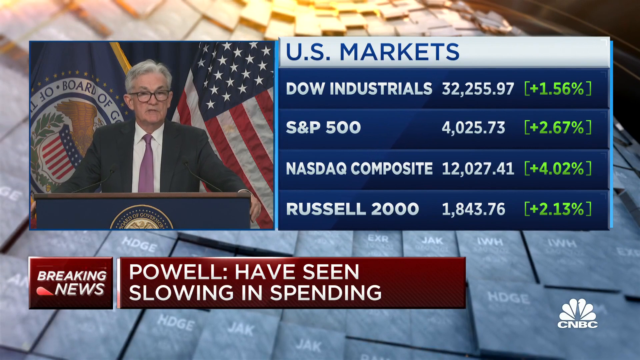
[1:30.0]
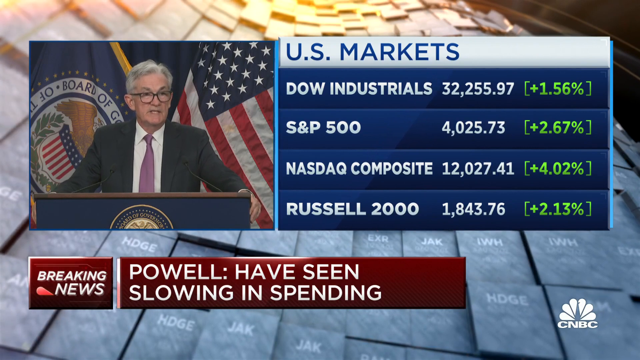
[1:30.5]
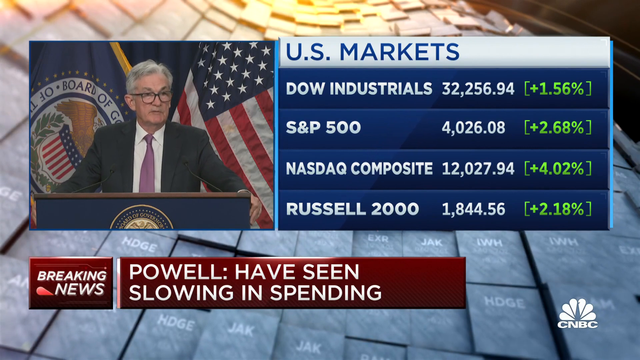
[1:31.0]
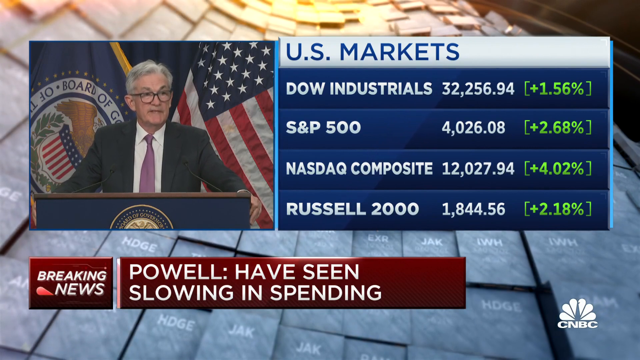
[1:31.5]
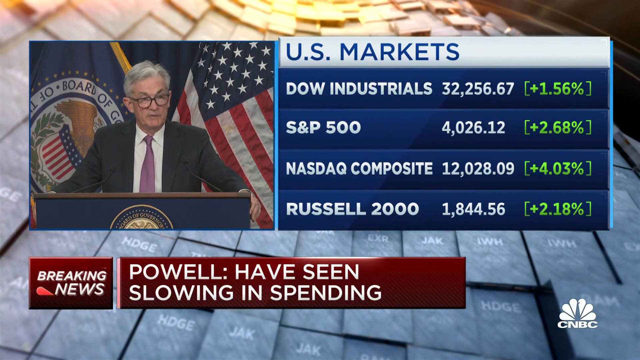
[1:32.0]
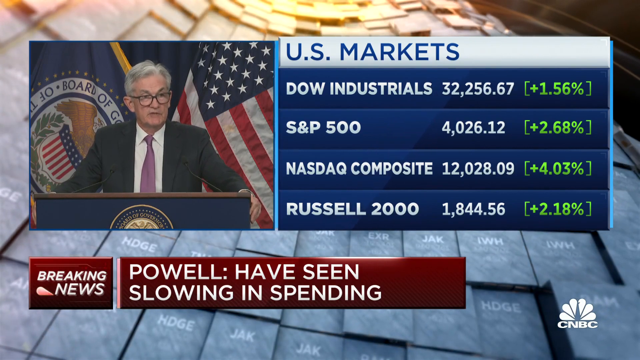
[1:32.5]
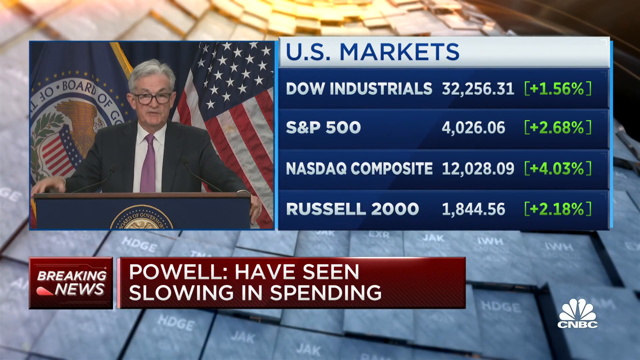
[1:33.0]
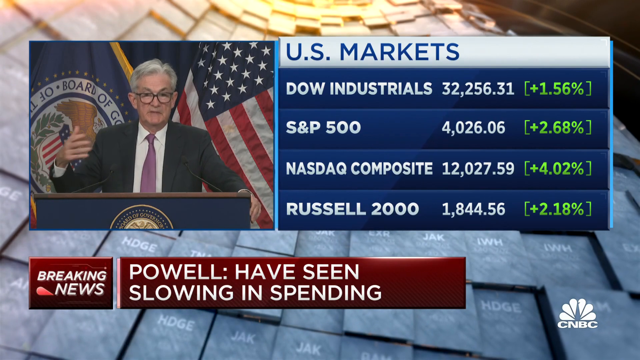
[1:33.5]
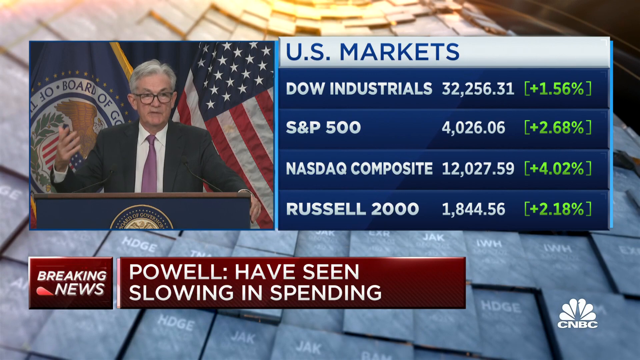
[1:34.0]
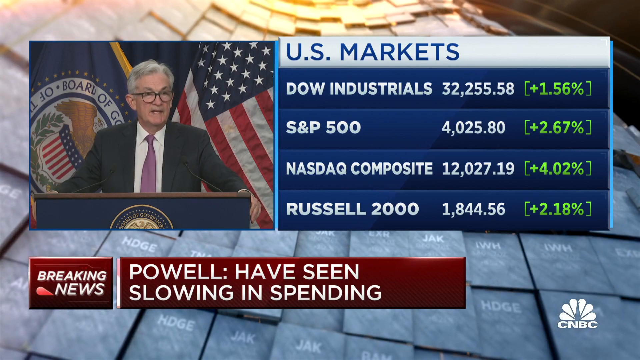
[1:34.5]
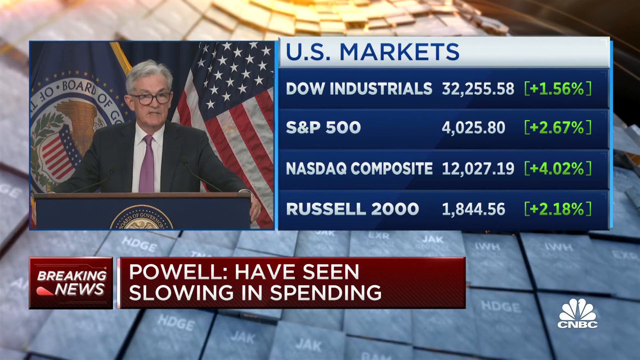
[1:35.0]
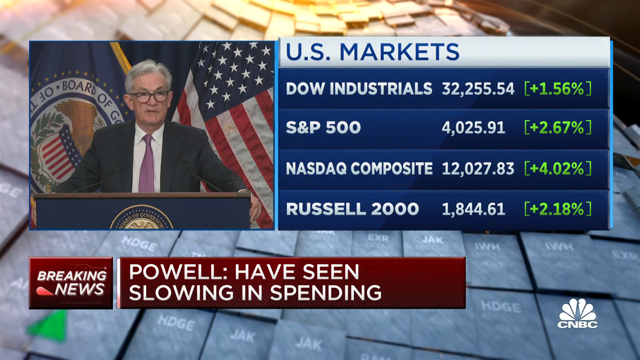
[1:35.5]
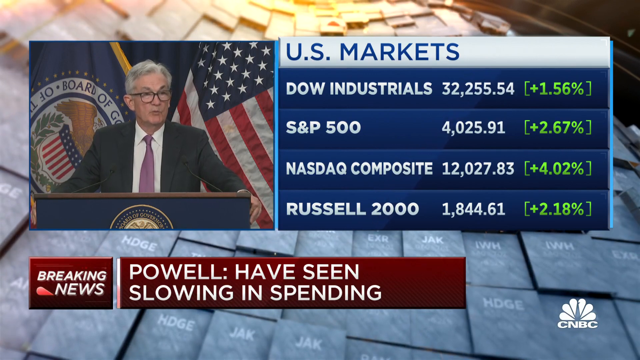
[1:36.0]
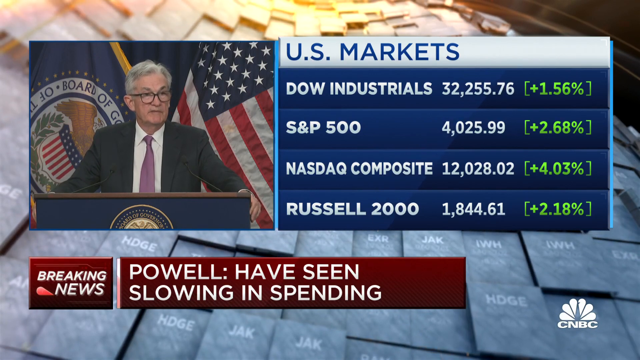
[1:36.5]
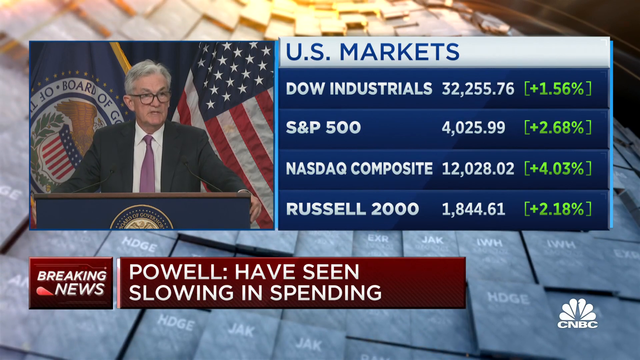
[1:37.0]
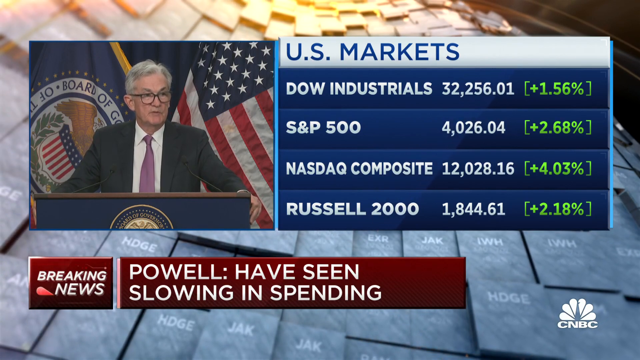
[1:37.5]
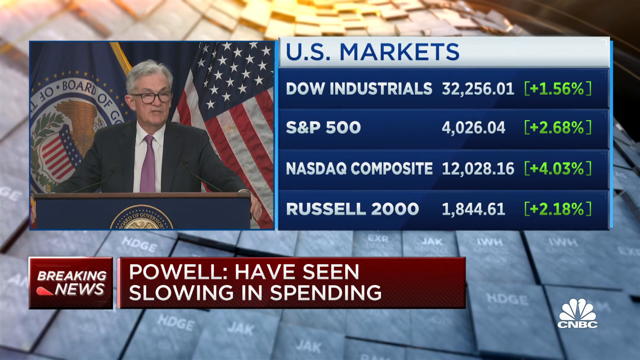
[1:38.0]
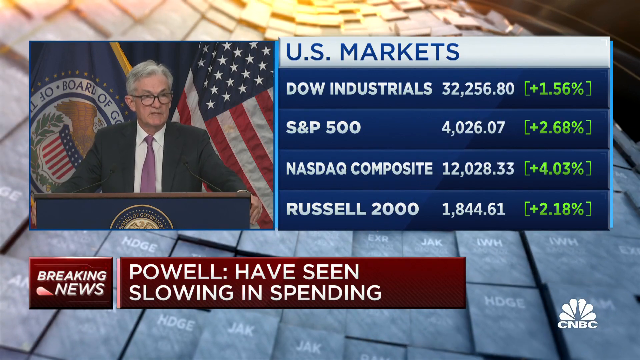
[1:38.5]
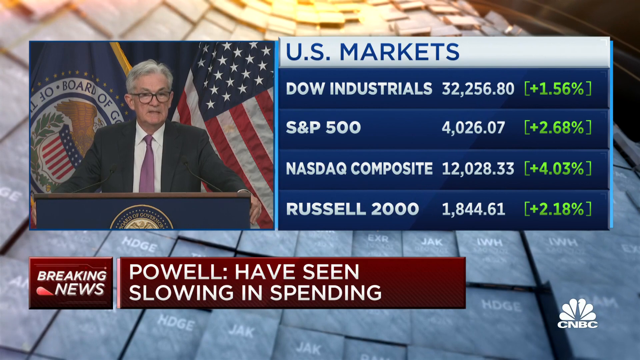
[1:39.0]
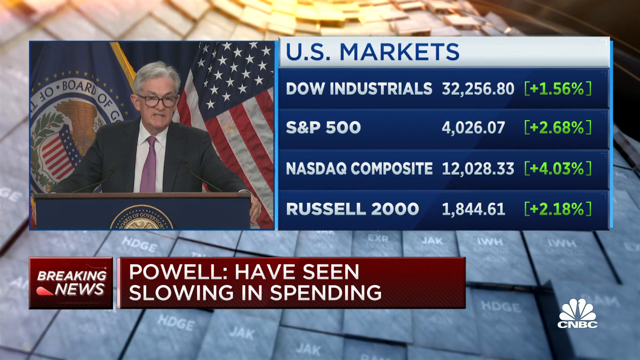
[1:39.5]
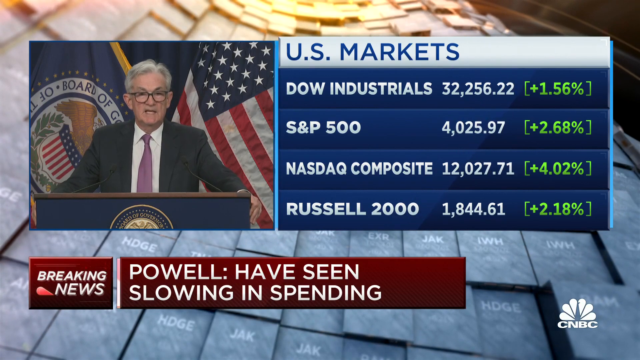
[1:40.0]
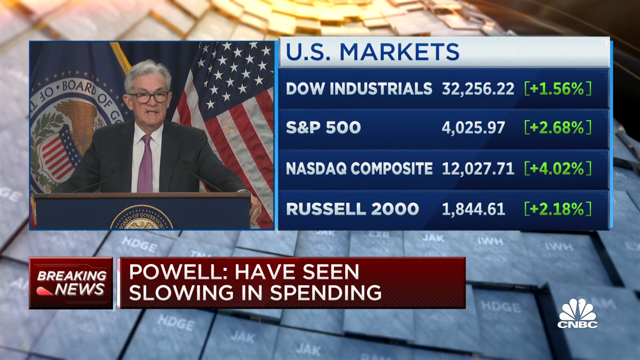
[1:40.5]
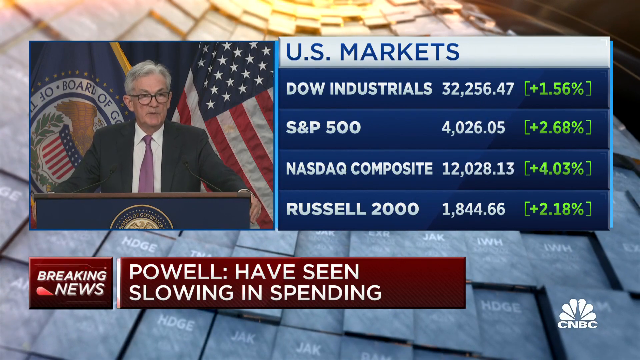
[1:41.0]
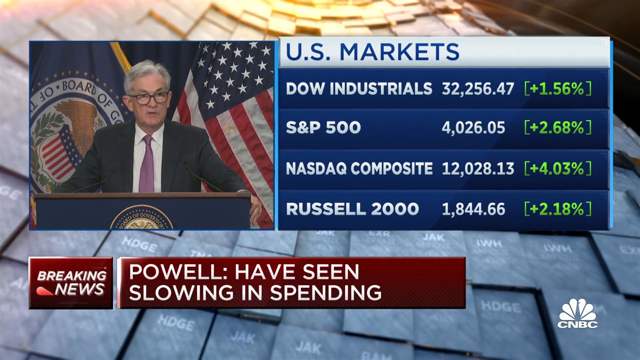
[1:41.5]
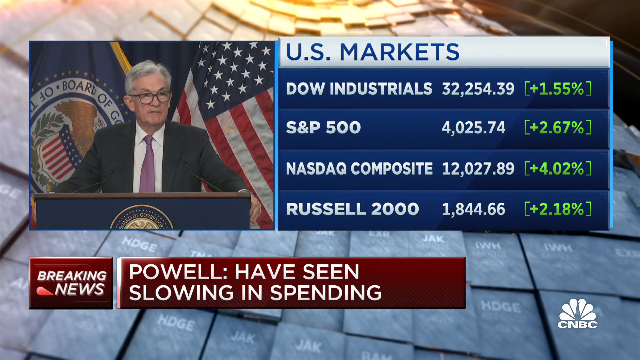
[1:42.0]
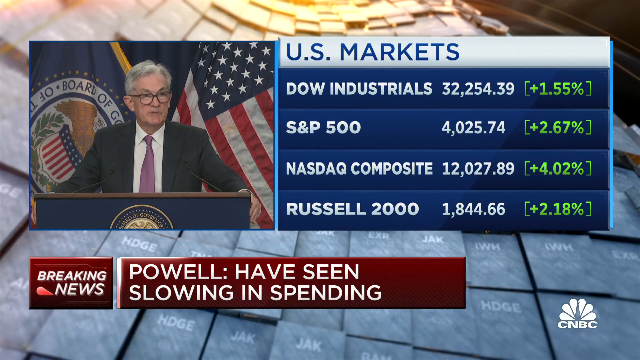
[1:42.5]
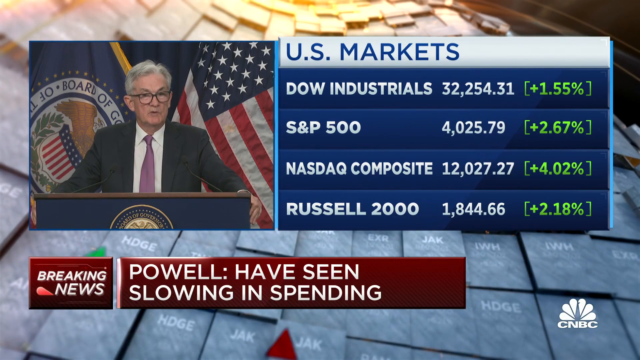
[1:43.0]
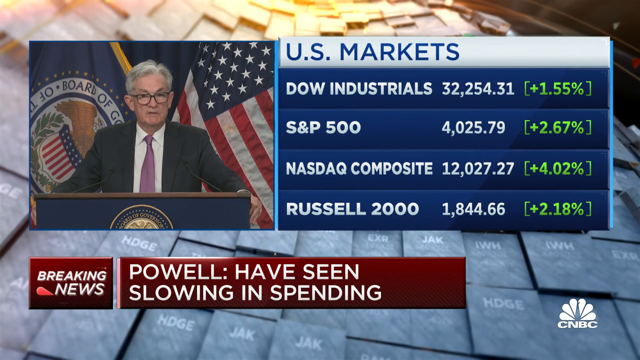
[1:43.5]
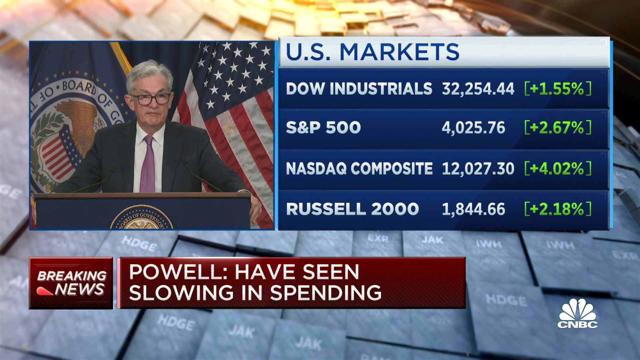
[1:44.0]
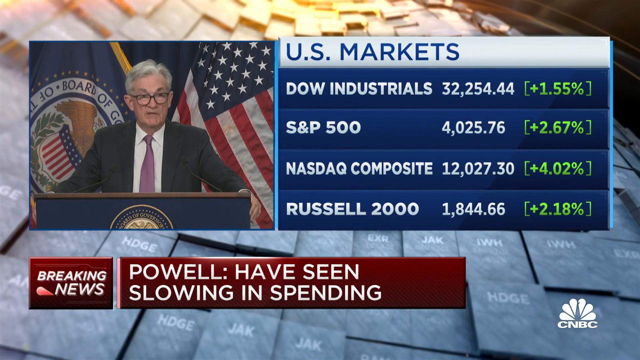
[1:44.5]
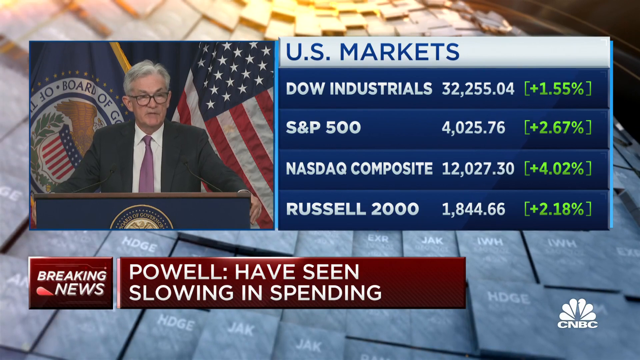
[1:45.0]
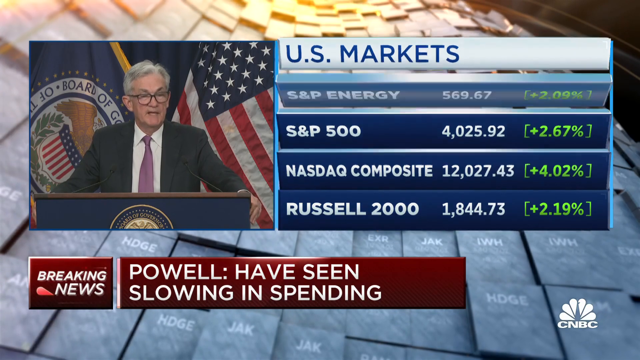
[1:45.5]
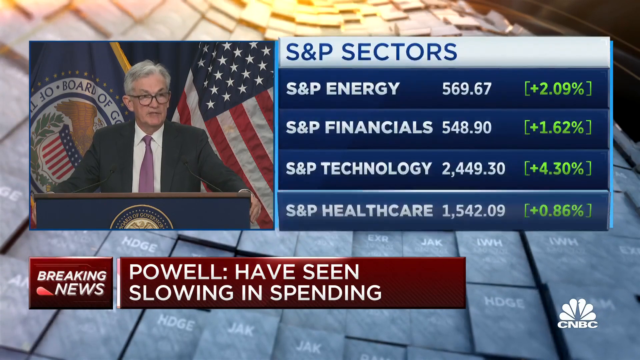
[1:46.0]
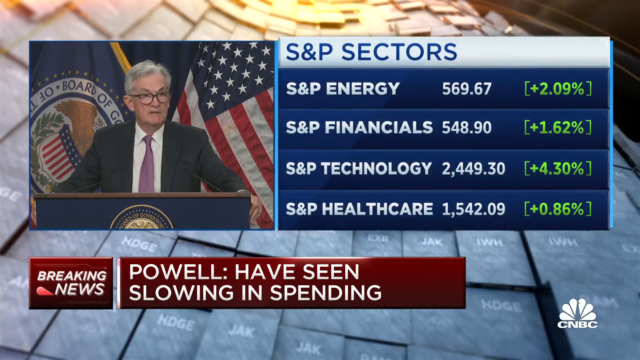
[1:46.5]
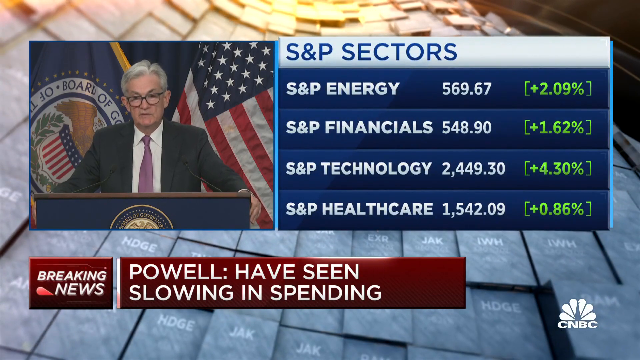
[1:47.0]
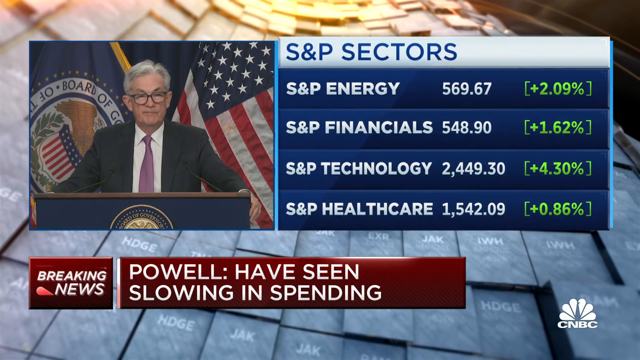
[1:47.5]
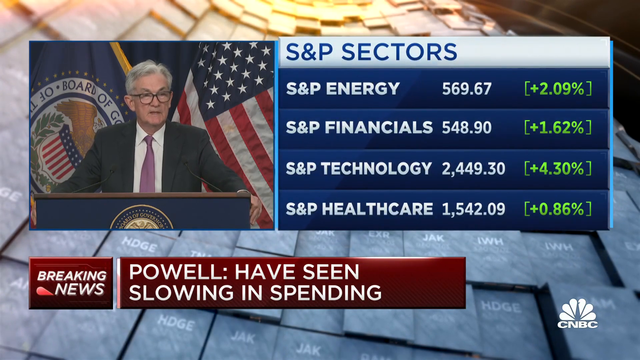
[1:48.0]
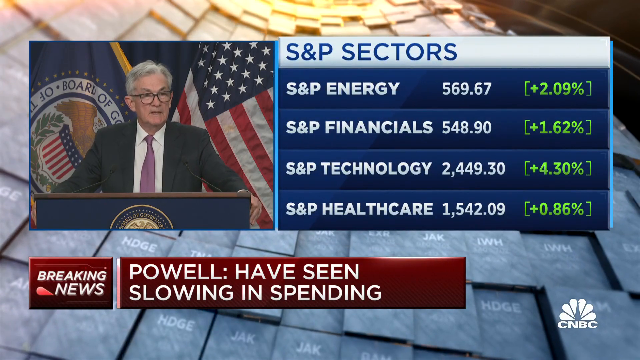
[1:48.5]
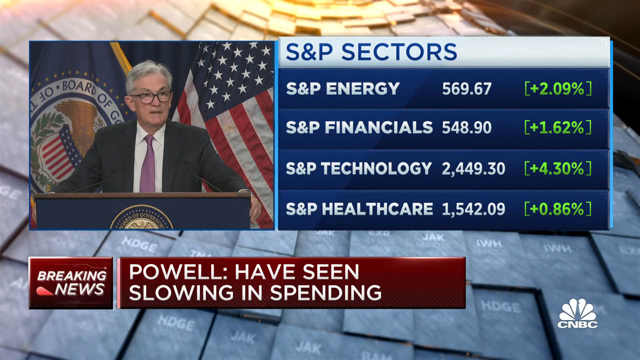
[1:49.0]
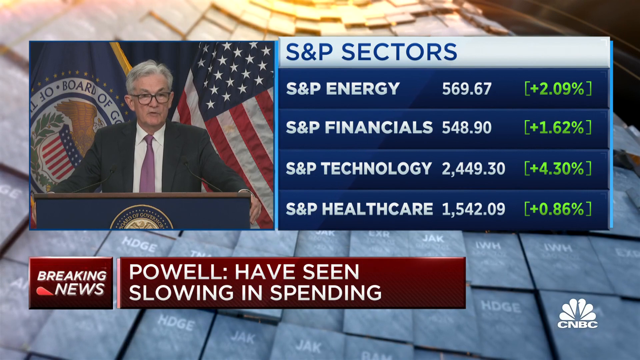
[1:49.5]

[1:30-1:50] U.S. market figures are shown. The Dow Industrial has risen a little, as have the S&P 500, the NASDAQ and the Russell 2000. A breakdown of the S&P sectors shows S&P Energy, S&P Financials, technology and healthcare all increasing, indicating that the market is bouncing back.